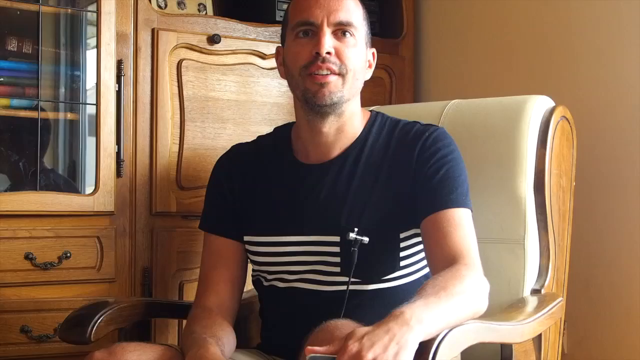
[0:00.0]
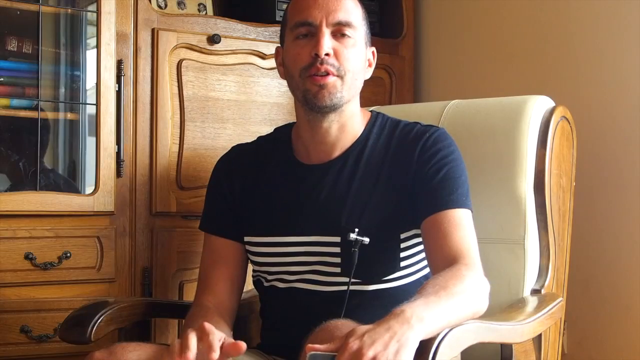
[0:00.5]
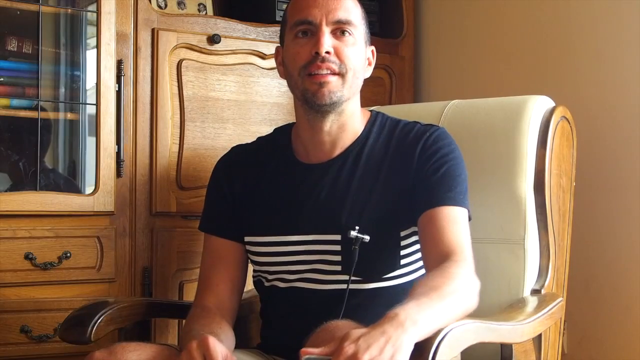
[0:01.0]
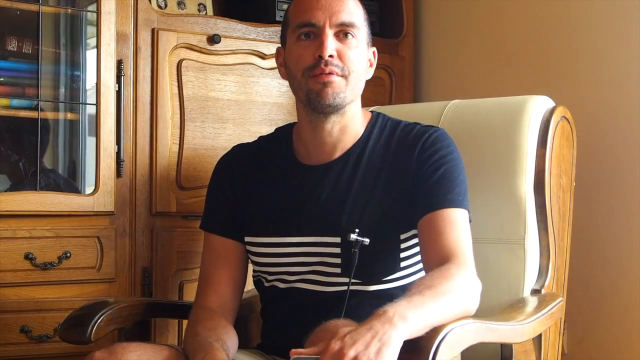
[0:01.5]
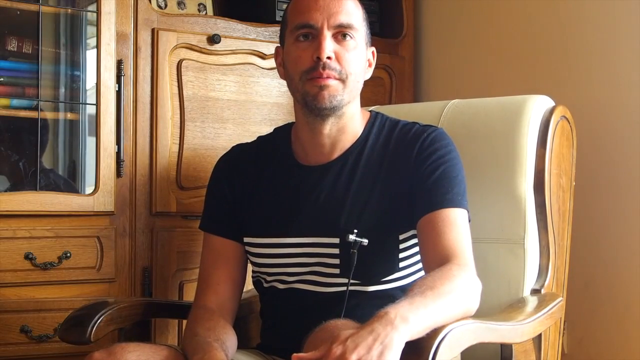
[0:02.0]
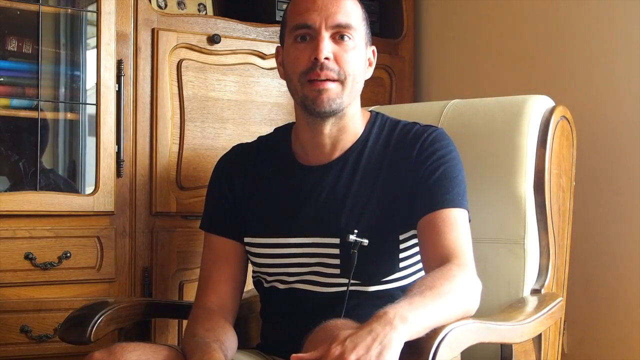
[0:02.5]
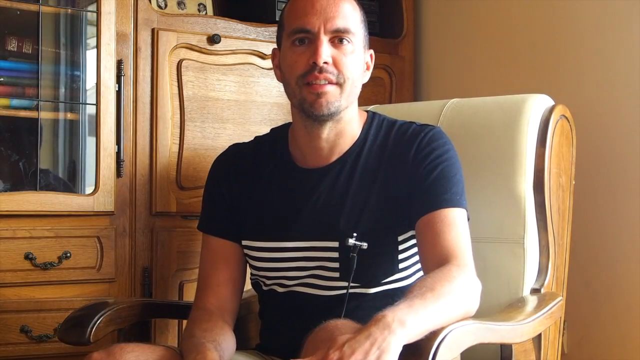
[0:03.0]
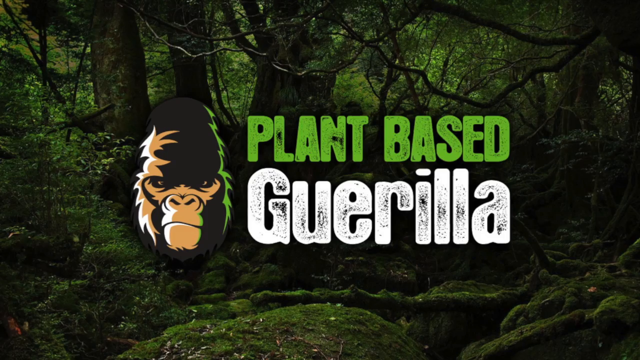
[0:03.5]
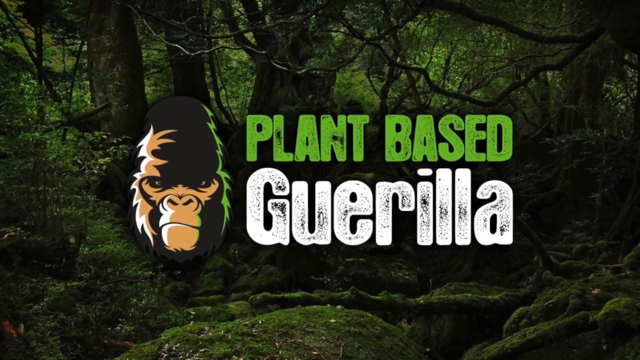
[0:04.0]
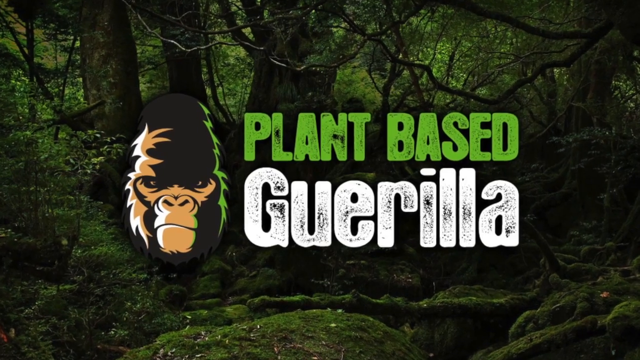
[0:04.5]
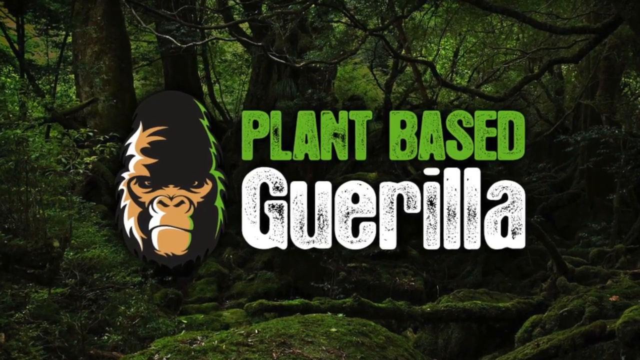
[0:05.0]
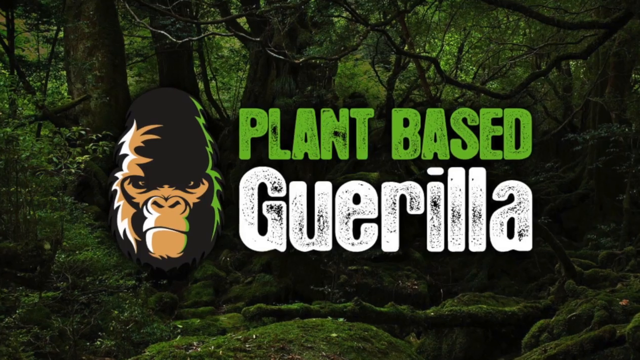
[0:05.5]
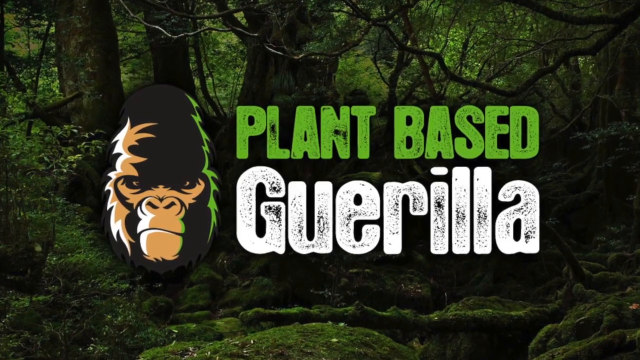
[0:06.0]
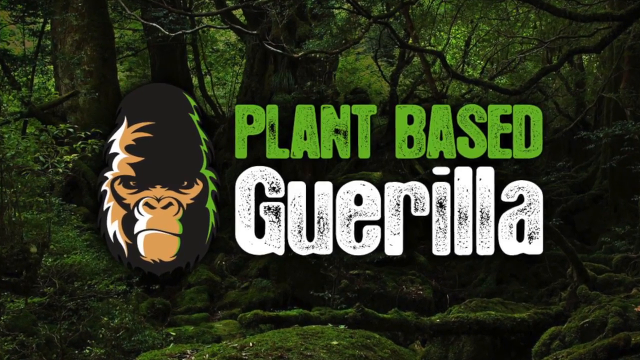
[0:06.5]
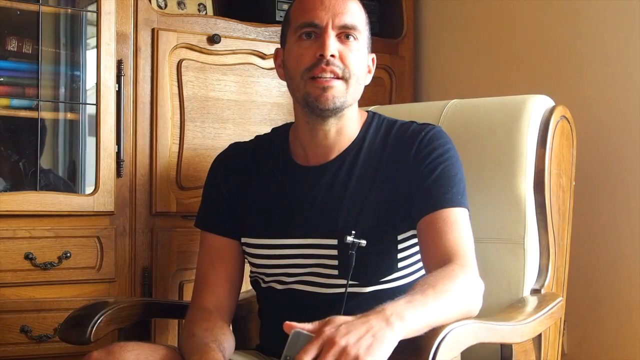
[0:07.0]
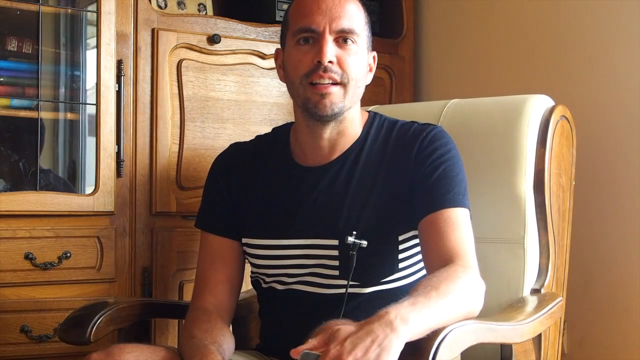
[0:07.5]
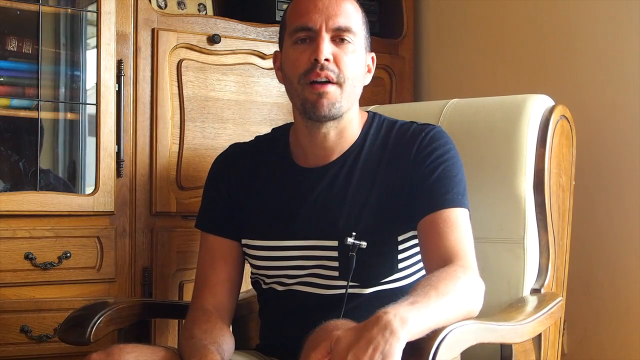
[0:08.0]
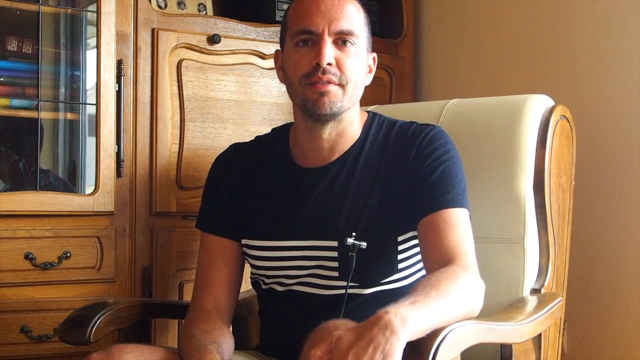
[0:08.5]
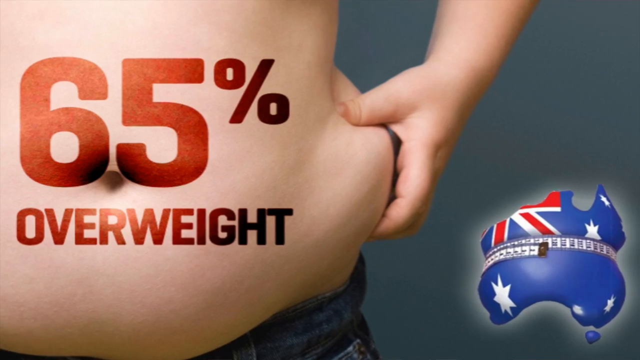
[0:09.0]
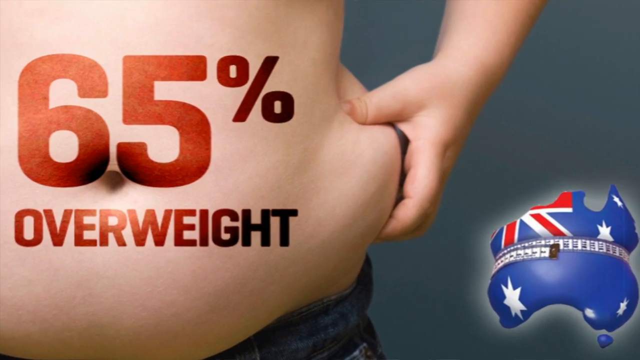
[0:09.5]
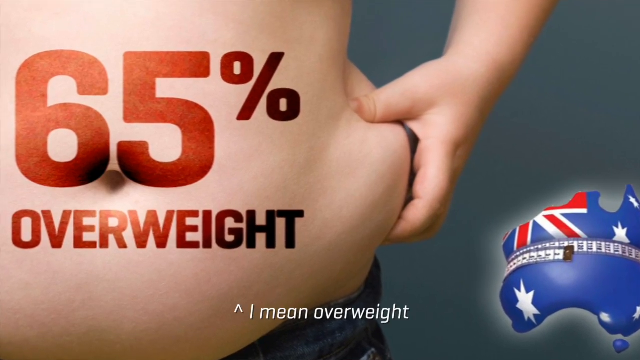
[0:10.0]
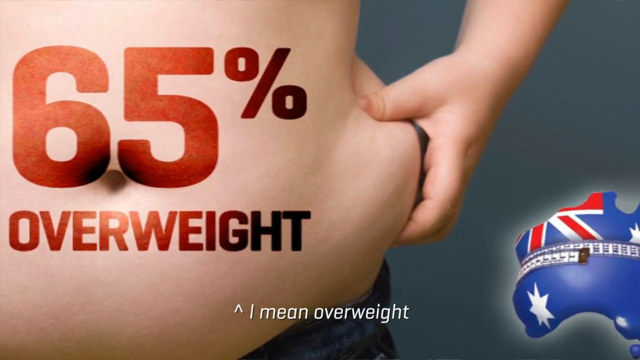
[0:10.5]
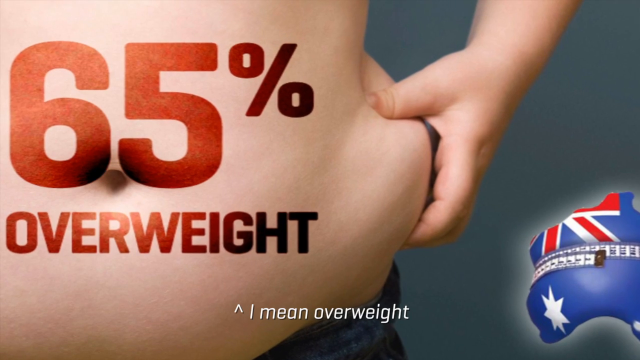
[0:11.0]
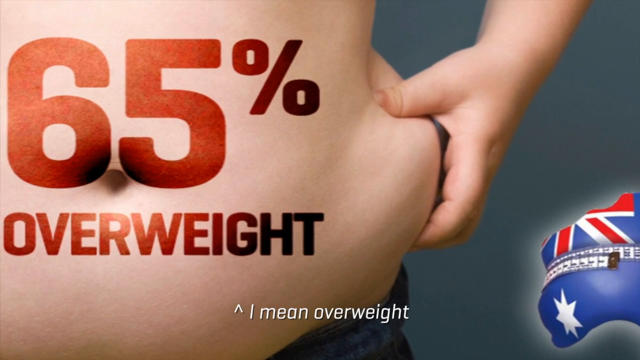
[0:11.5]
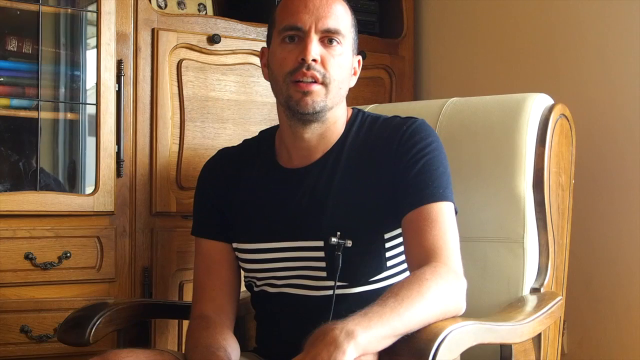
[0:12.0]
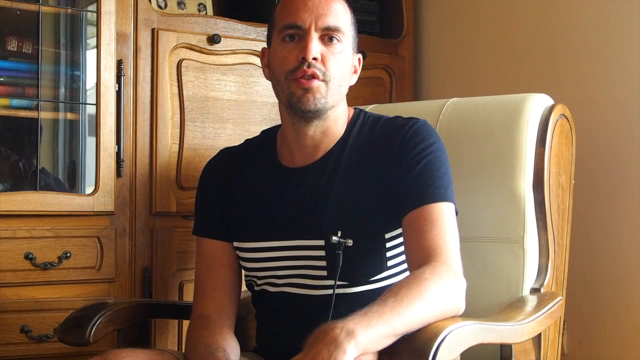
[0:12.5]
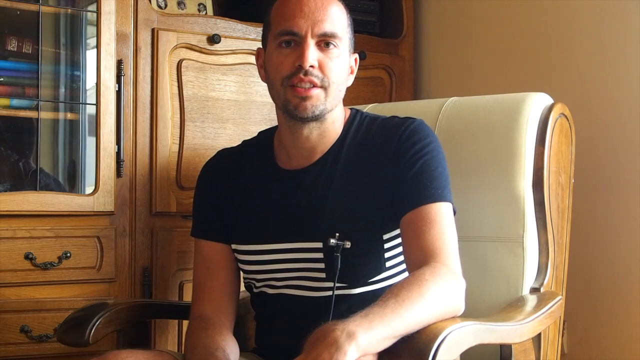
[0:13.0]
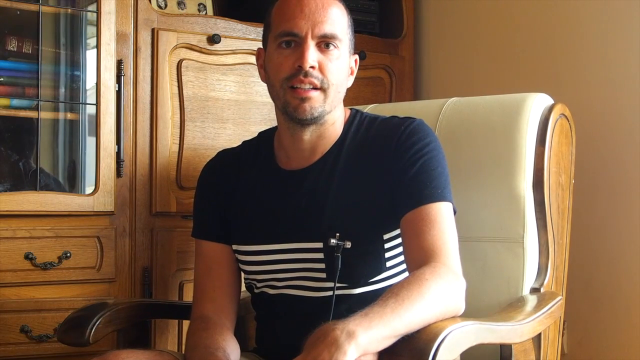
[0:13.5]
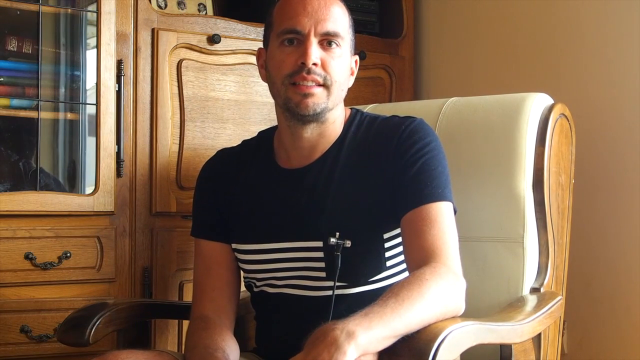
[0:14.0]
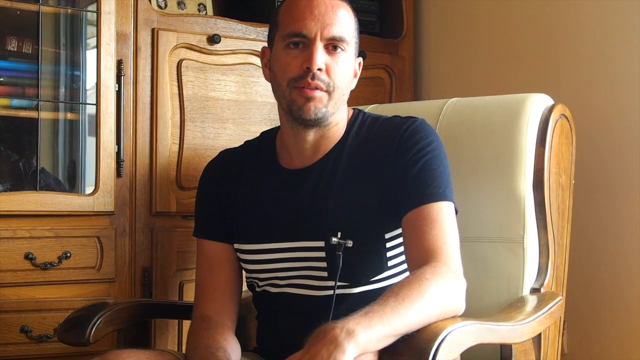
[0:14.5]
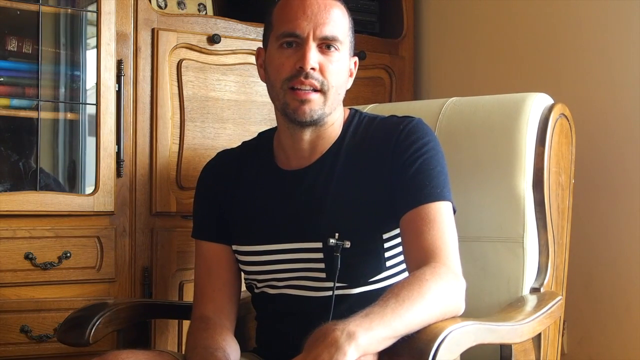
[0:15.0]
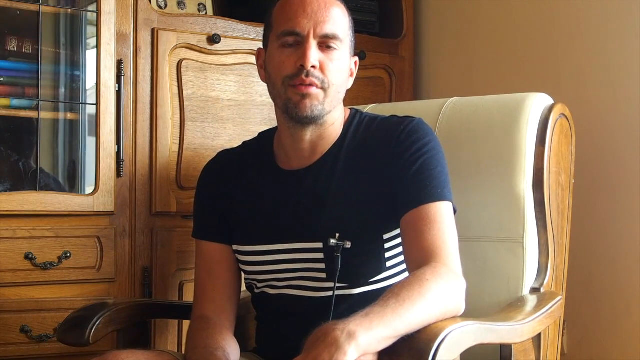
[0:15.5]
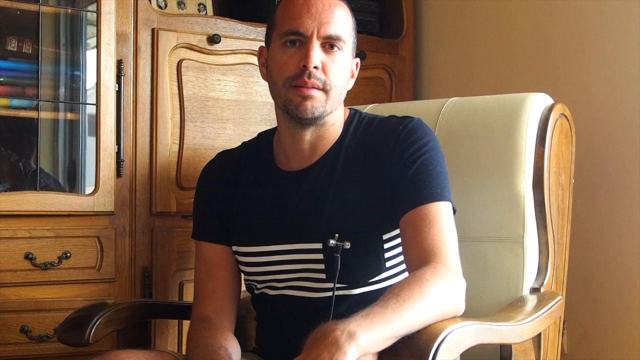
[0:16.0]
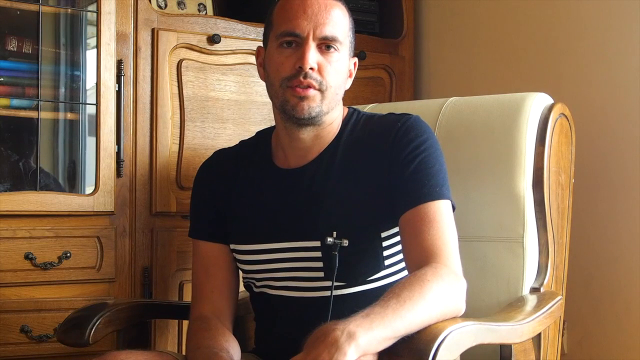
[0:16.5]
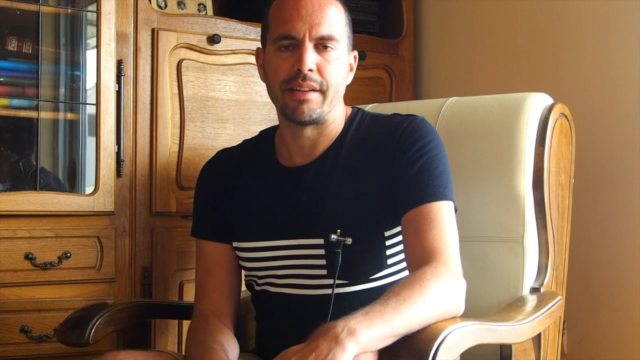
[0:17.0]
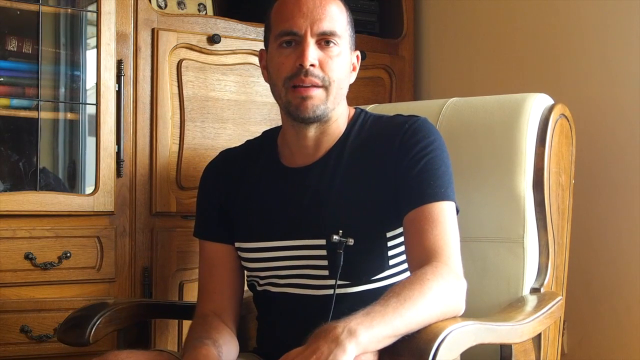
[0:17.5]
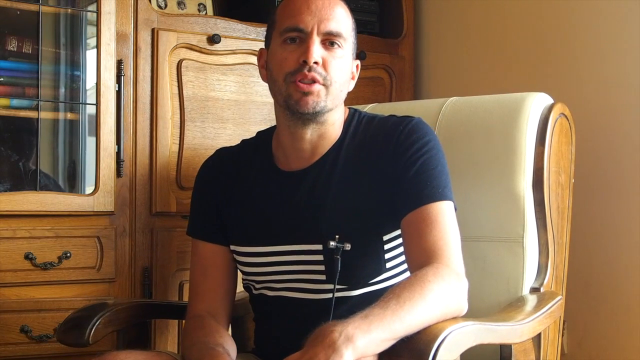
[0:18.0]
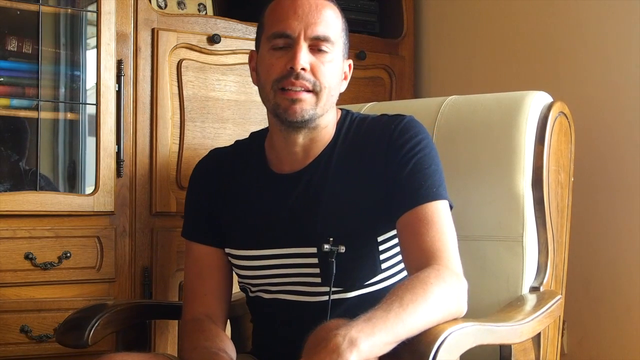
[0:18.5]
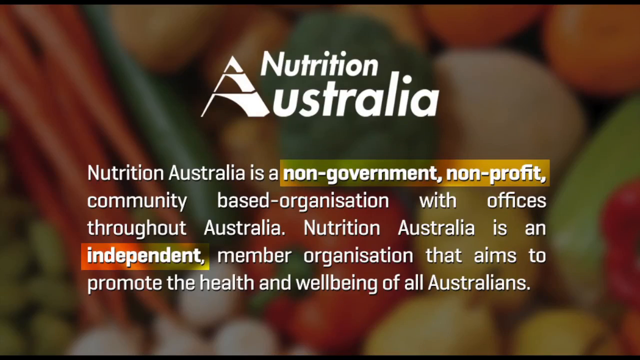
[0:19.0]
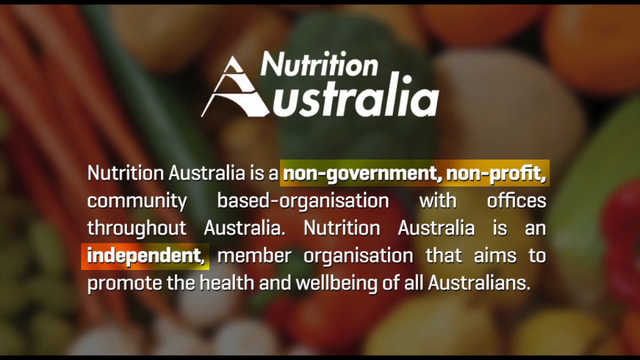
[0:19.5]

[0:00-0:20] A man with buzzed dark hair and dark facial scruff wears a black t-shirt with white stripes around the chest and a pocket on the chest. To his right are cabinets, and he is sitting on a wooden chair with thick white padding, speaking towards the camera. A jungle forest background then appears with an emblem on top: an illustration of a gorilla, with "plant based" in green to the right of it and, underneath, "guerilla" in white, spelled g-u-e-r-i-l-l-a. The man in the white chair is shown speaking again; it looks as if a microphone is being held right near his pocket. Next is an image of an obese person, seen only from the abdomen to the waist; just above the navel are the red numbers "65%" and underneath, in red, "overweight". To the right is what appears to be Great Britain's flag in the shape of the country, with a tape measure wrapped around it, and it is kind of bulging as if the whole country is overweight. Underneath, white text appears with an up arrow and the word "overweight". The man in the white chair speaks towards the camera again. Then a page with a blurred background of vegetables appears, with white writing on top reading "Nutrition Australia" and "Nutrition Australia is a non-government, non-profit, community-based organization with offices throughout Australia. Nutrition Australia is an independent member organization that aims to promote the health and well-being of all Australians."